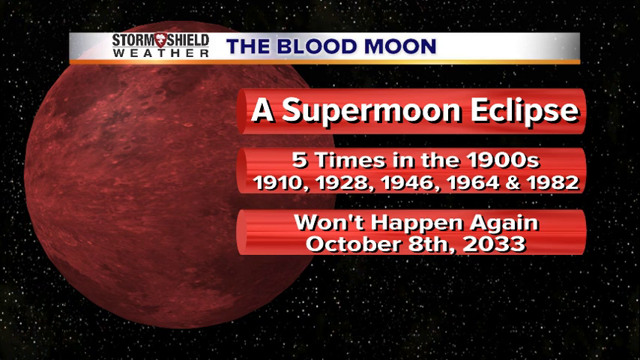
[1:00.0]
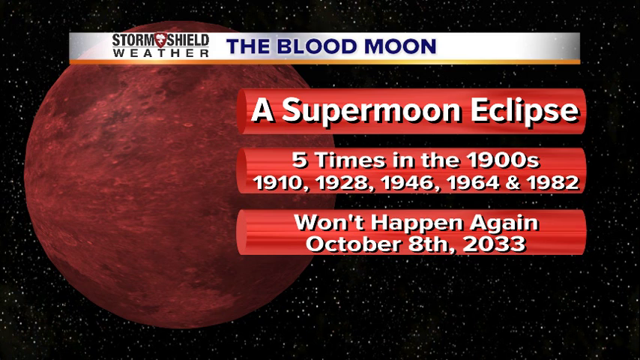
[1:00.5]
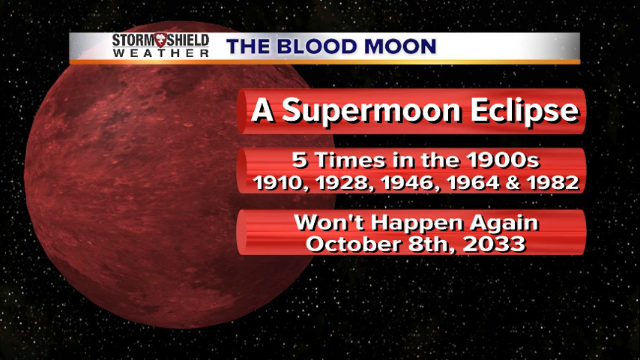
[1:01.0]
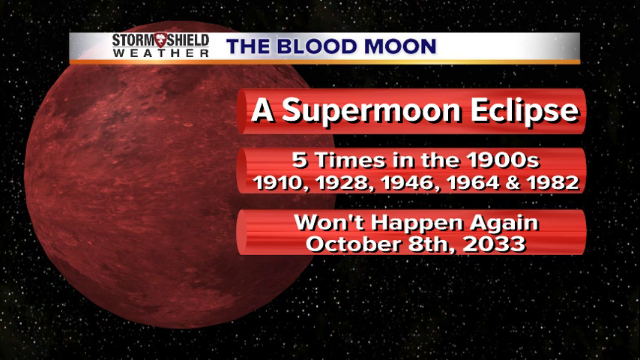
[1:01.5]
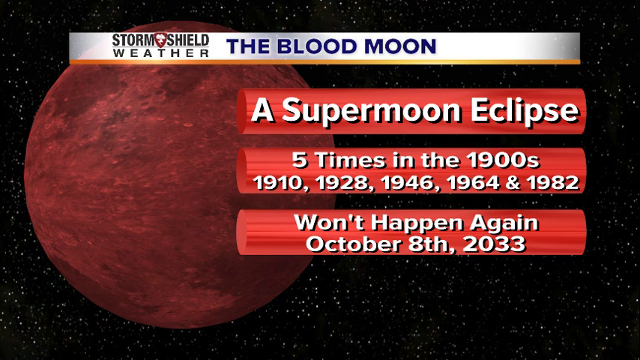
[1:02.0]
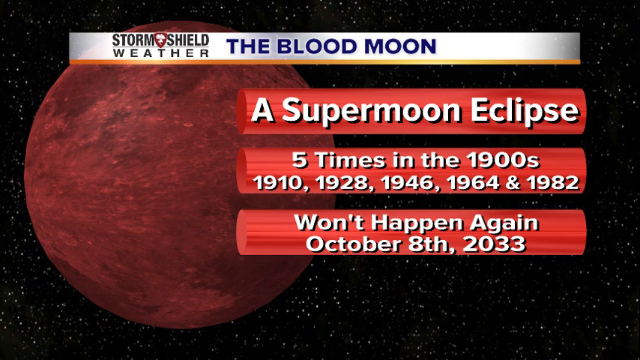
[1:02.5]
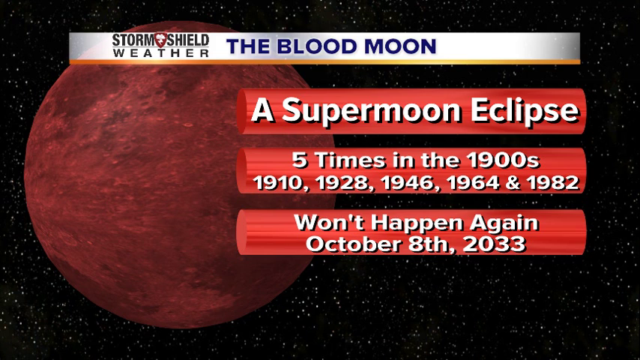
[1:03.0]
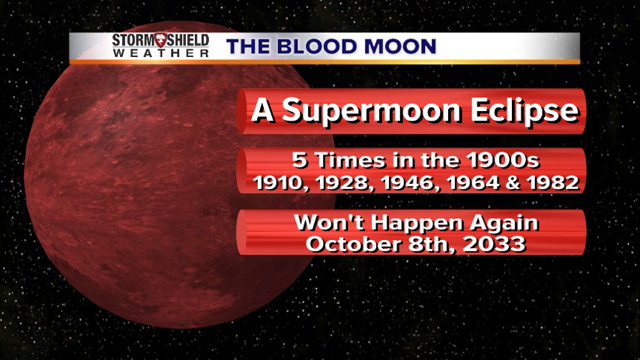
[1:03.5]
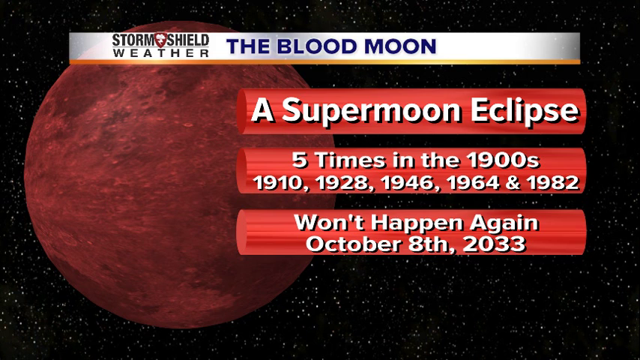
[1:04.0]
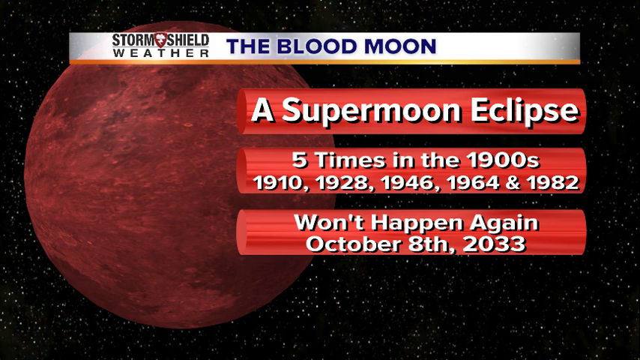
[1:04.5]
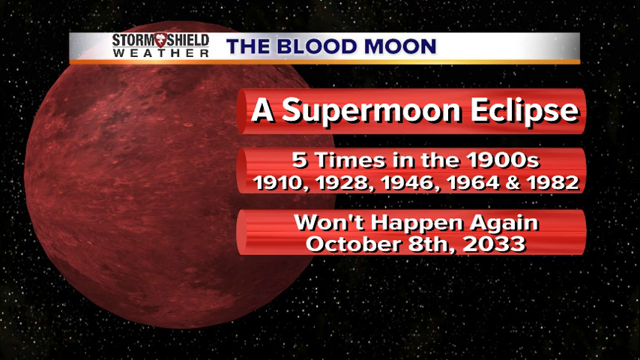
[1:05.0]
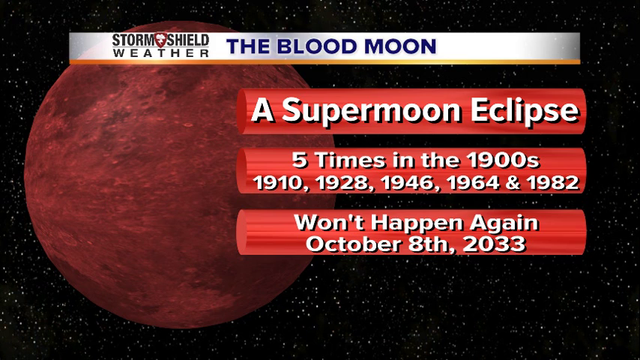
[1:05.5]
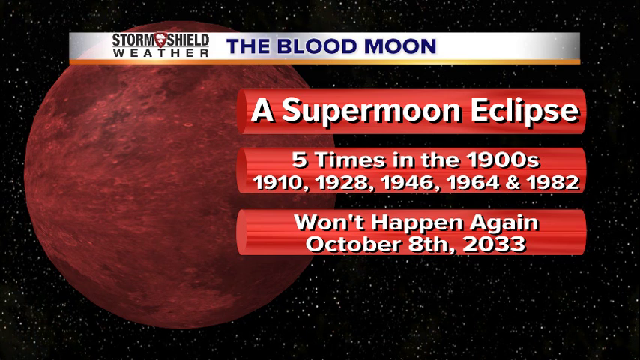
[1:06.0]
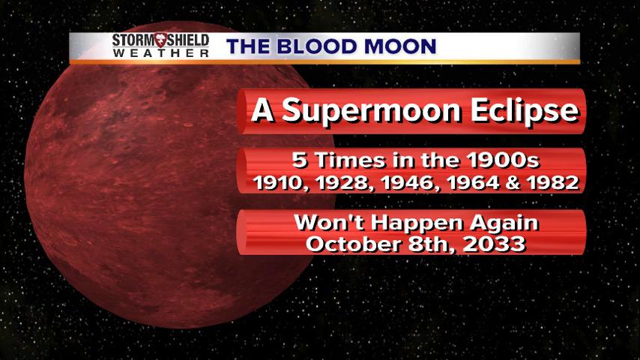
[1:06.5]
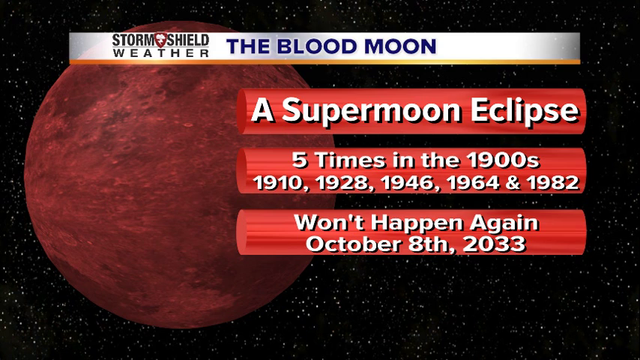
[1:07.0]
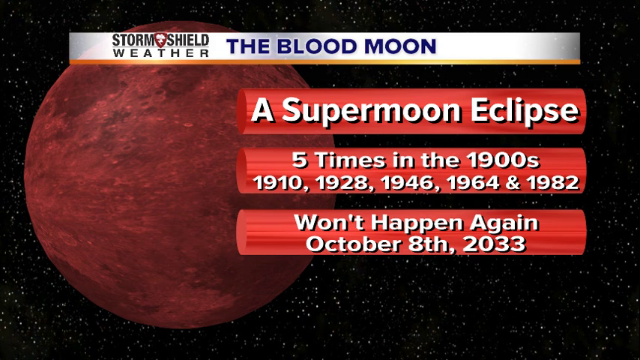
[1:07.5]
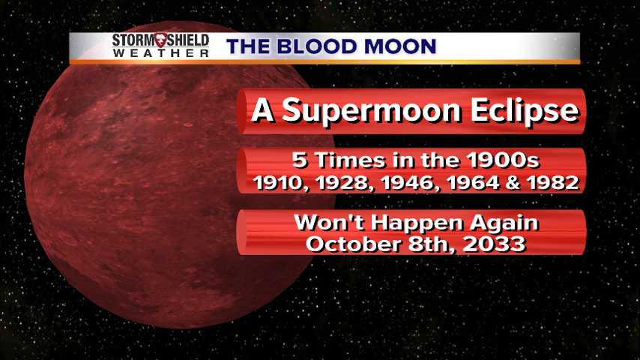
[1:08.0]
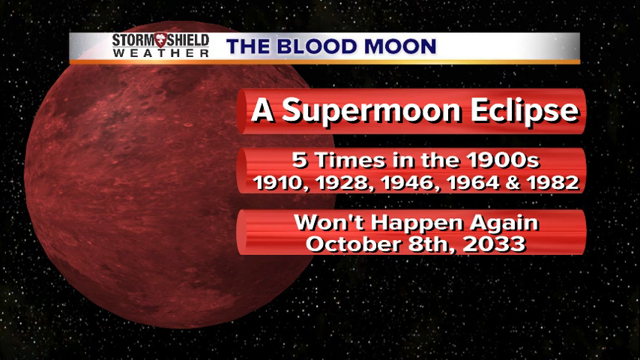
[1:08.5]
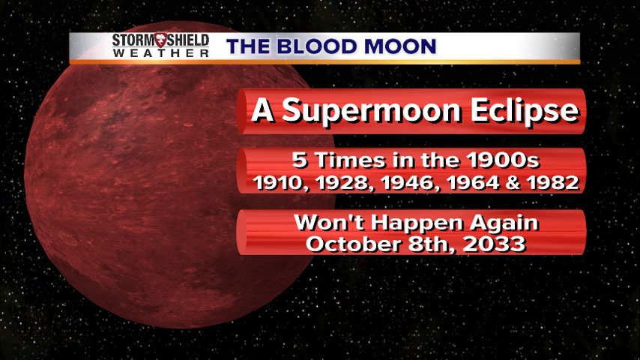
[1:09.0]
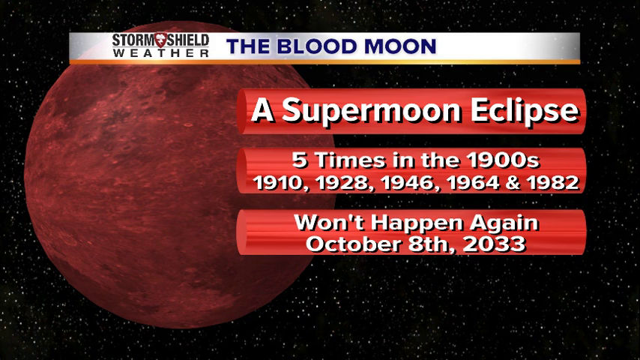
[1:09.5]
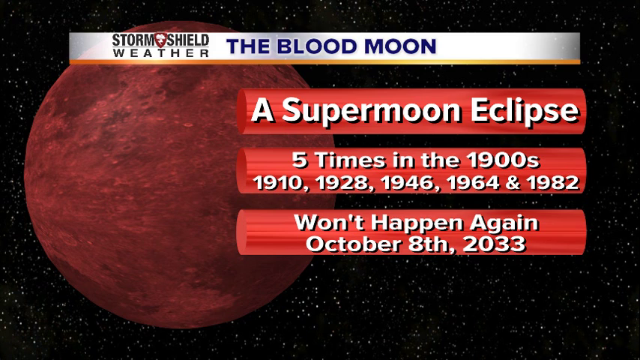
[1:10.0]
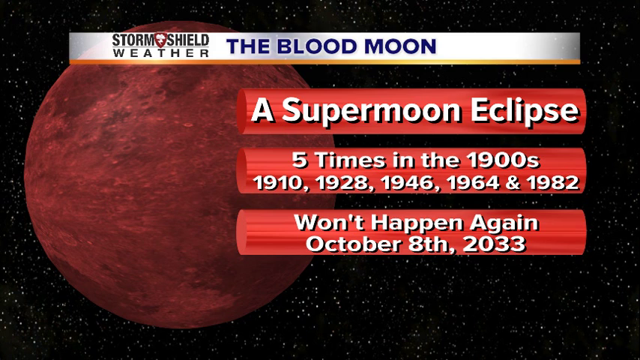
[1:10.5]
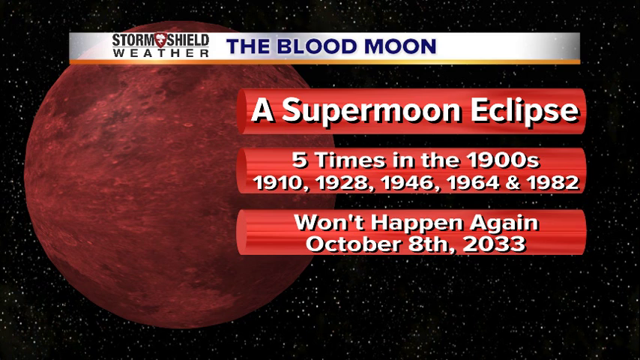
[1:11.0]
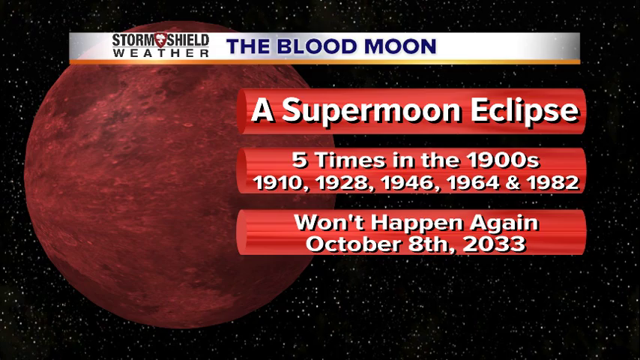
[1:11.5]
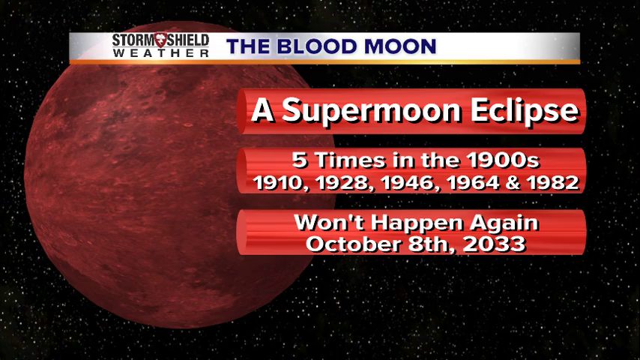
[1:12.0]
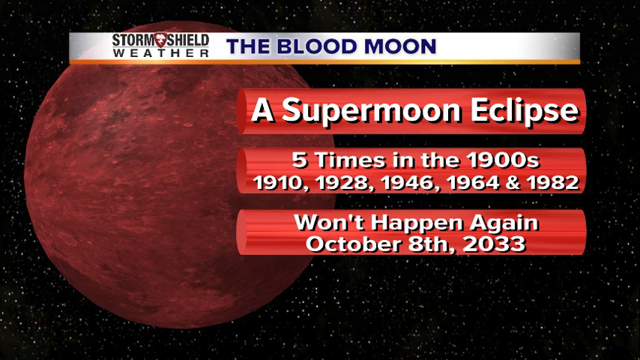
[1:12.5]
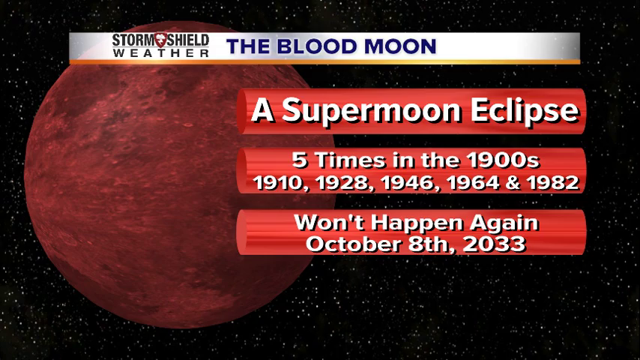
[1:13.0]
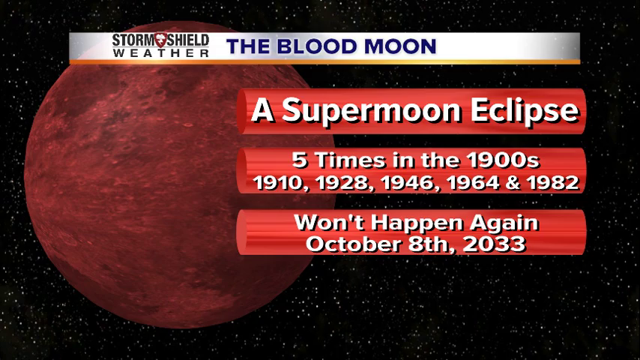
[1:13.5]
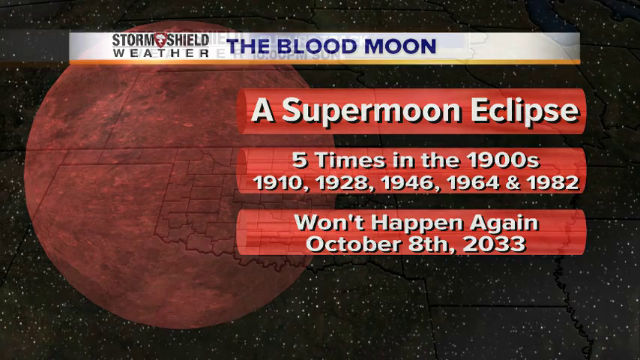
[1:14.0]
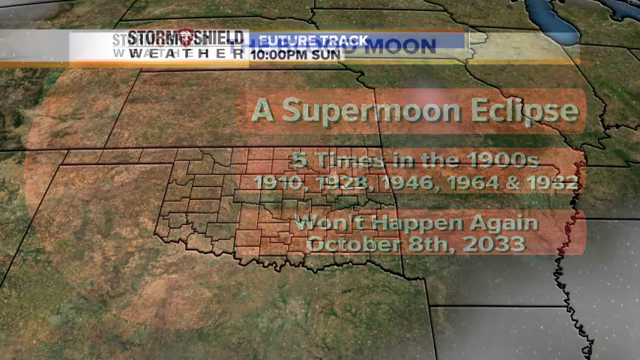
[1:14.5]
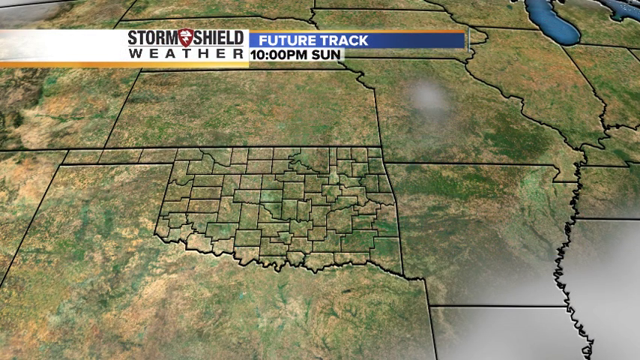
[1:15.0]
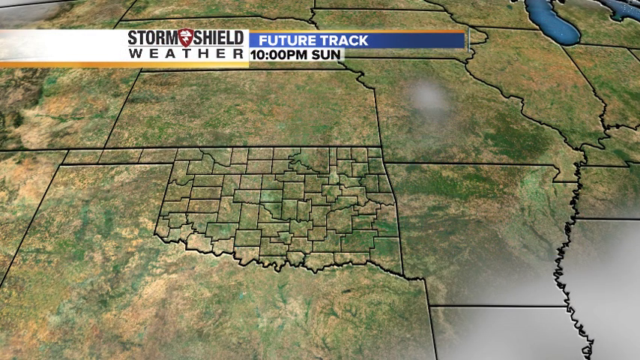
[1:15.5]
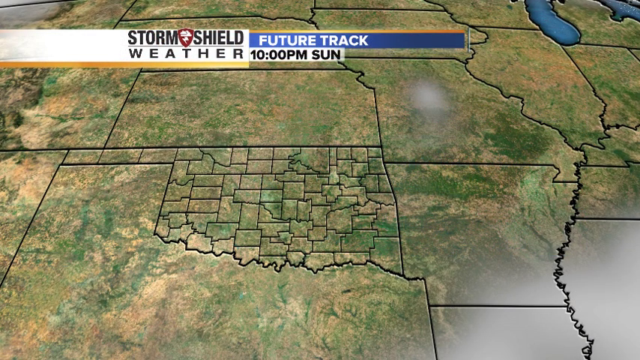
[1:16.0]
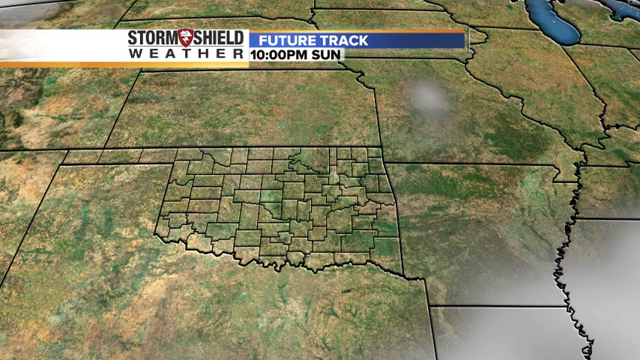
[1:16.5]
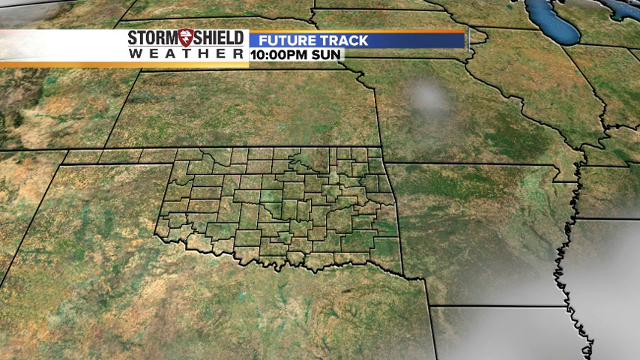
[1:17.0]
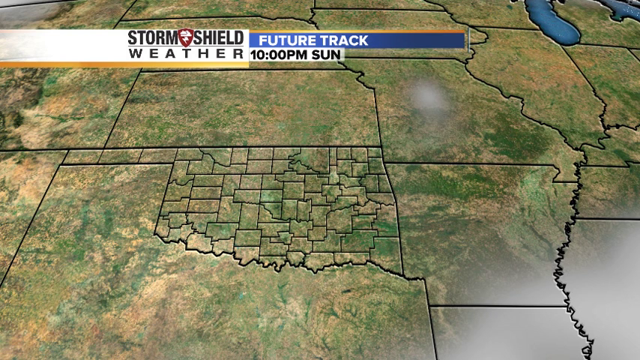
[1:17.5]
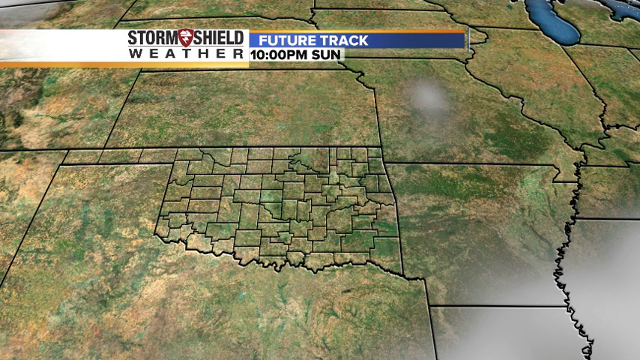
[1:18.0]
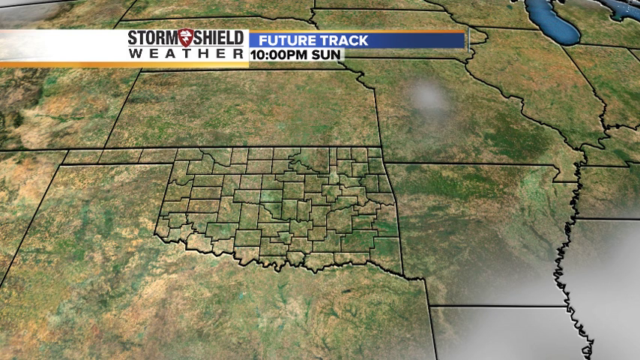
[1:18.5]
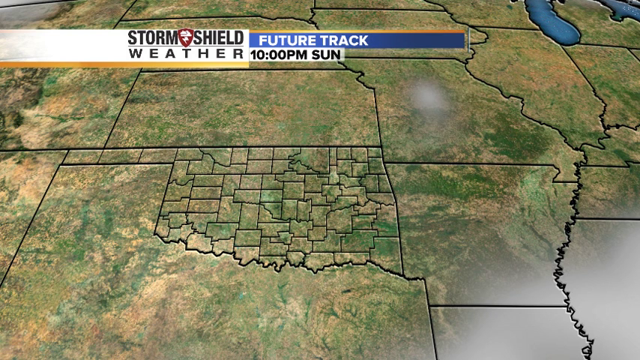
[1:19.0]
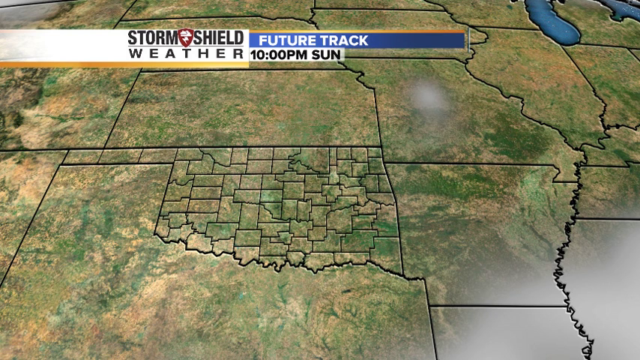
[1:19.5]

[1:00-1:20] A white banner with a small yellow underline reads "Storm Shield Weather", and to the right of it, in purple text, it says "the blood moon". The background is black with white speckles indicating the universe, and a very large reddish pink circle has dark spots, lighter spots and some whitish spots that give an indication of the moon's texture. To the right, red-orange banners with white text say "a supermoon times in the 1900s 1910 1928 1946 1964 and 1982 won't happen again October 8th 2033". A new shot then shows a topographical map with black lines indicating different regions and various shades of green, yellow and gray indicating different topography; the map is titled "future track 10:00 pm sun".